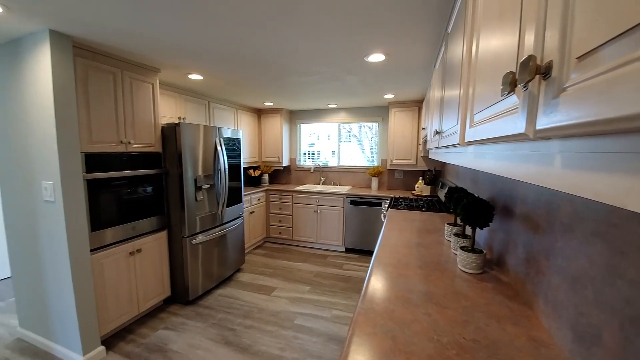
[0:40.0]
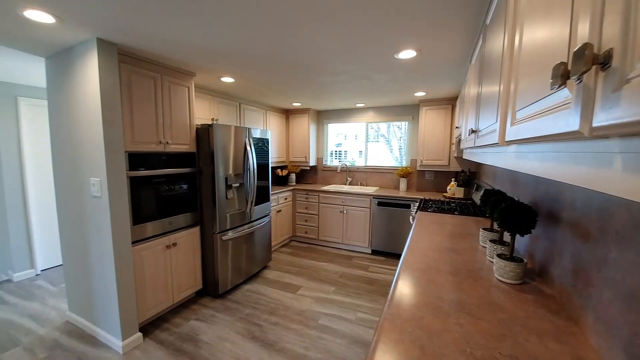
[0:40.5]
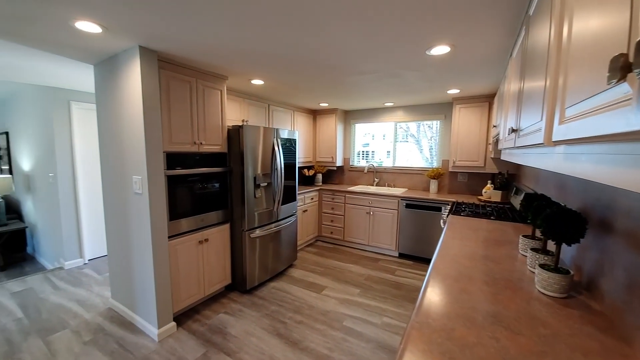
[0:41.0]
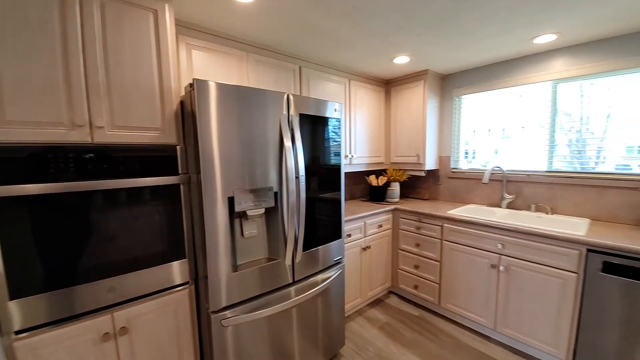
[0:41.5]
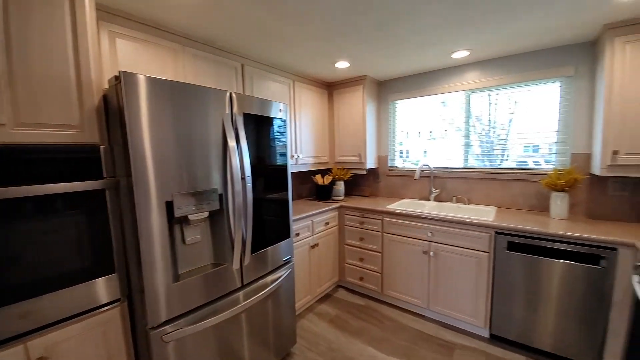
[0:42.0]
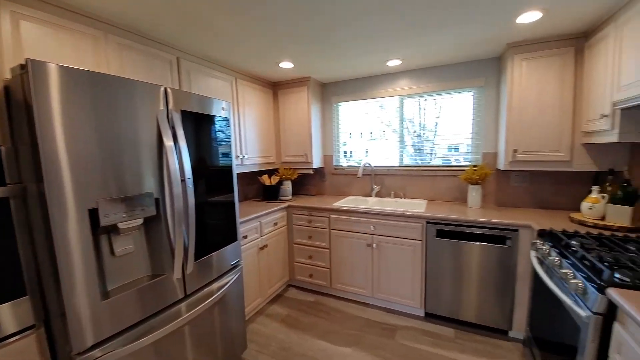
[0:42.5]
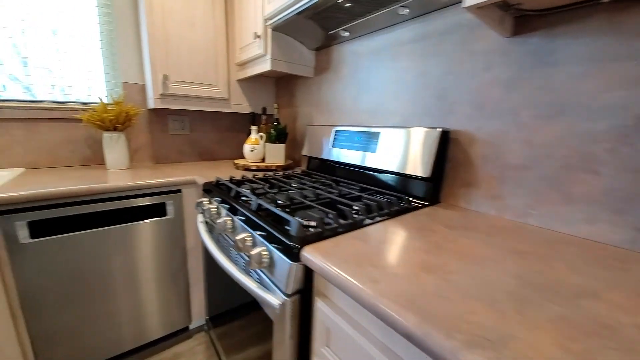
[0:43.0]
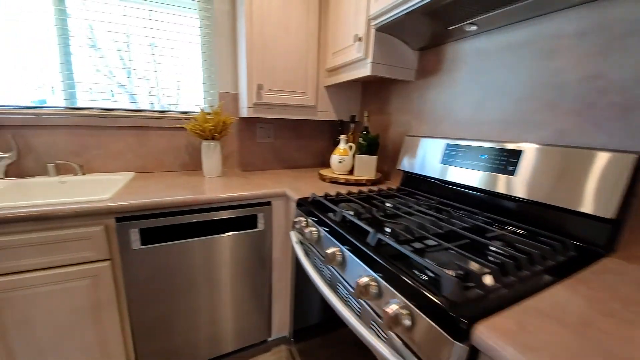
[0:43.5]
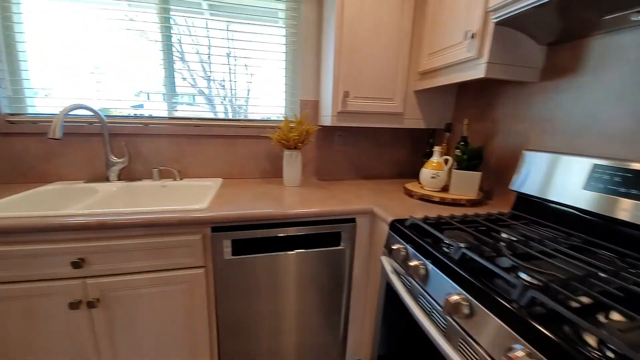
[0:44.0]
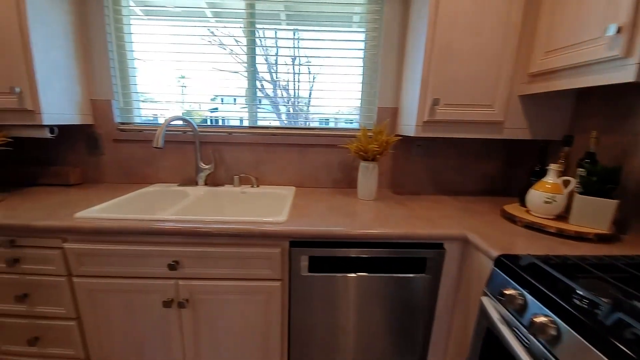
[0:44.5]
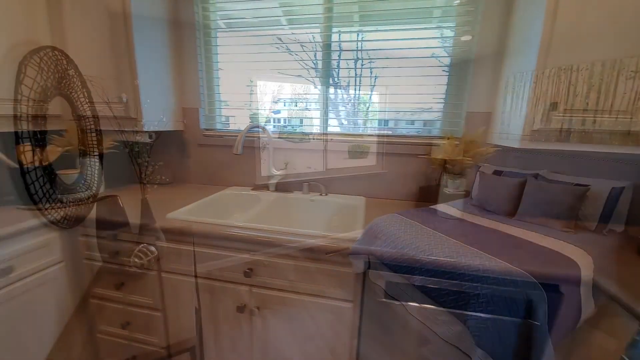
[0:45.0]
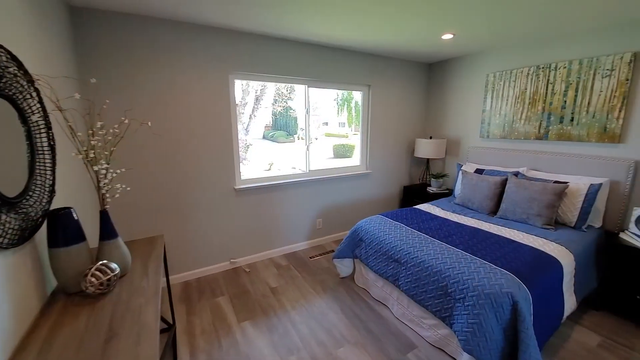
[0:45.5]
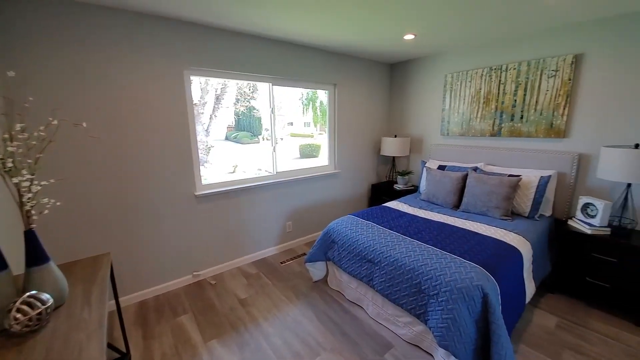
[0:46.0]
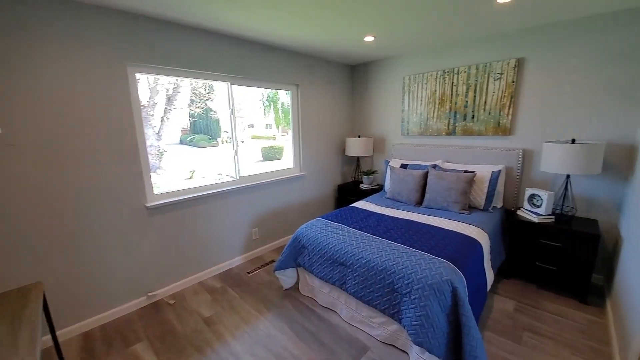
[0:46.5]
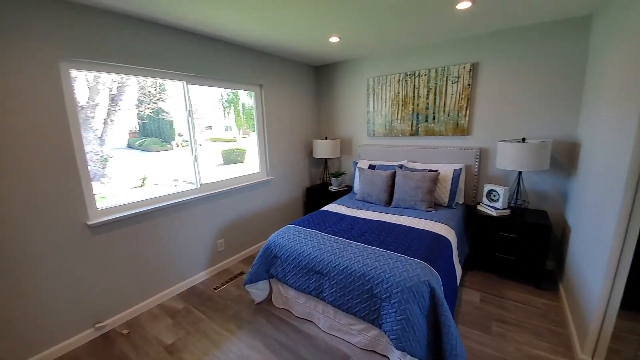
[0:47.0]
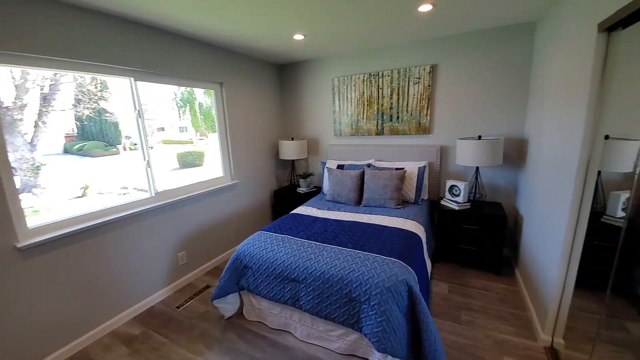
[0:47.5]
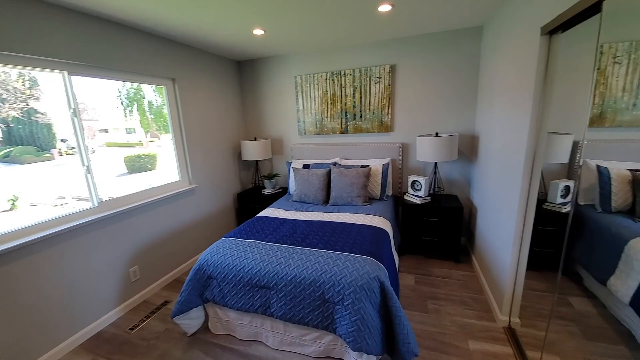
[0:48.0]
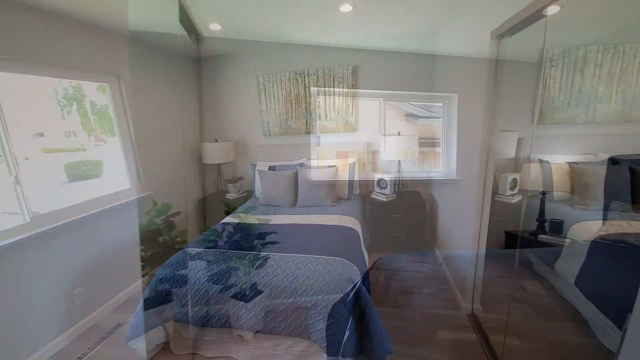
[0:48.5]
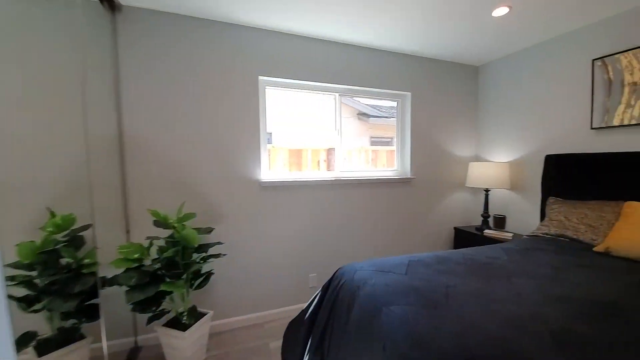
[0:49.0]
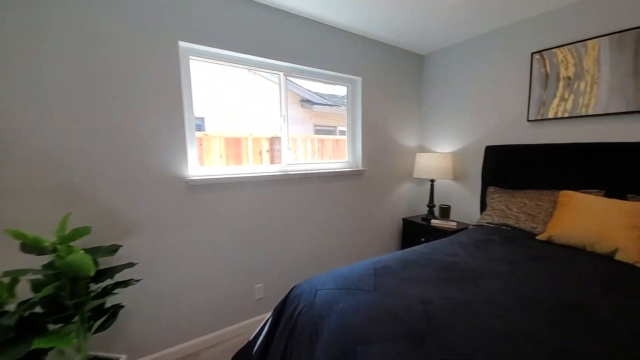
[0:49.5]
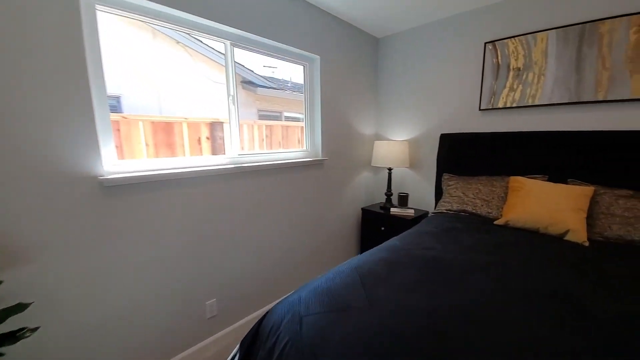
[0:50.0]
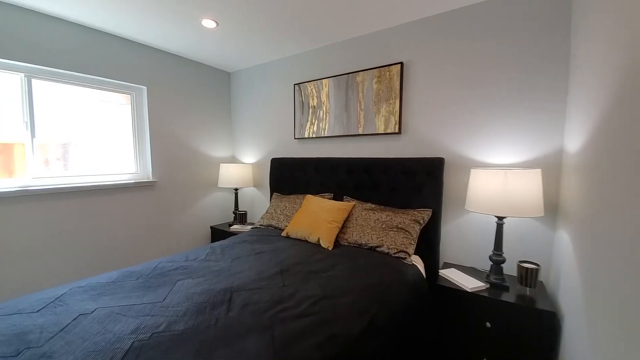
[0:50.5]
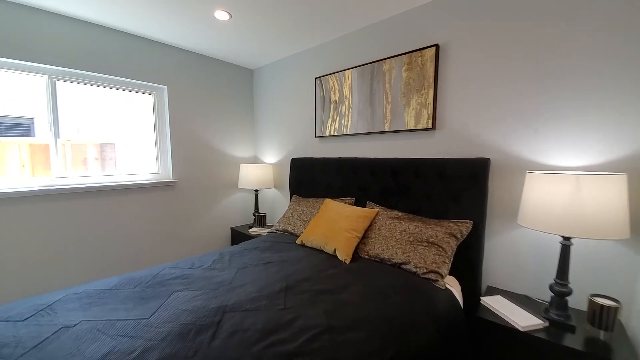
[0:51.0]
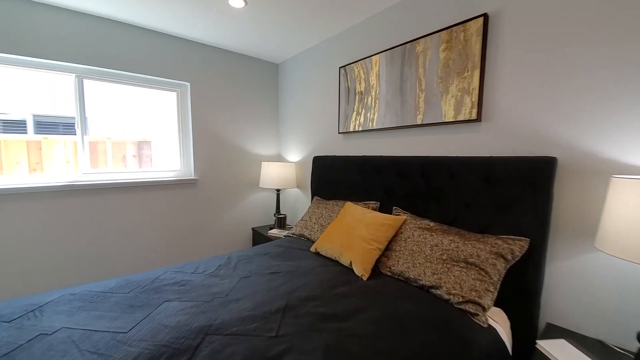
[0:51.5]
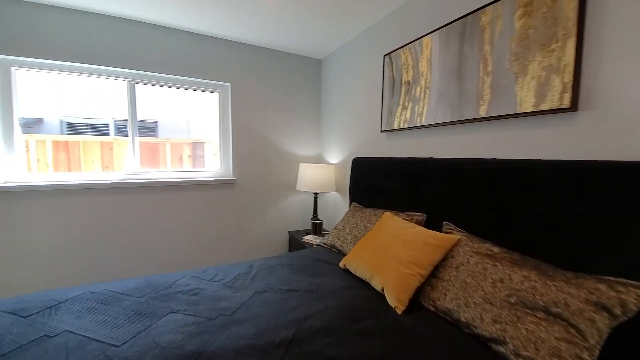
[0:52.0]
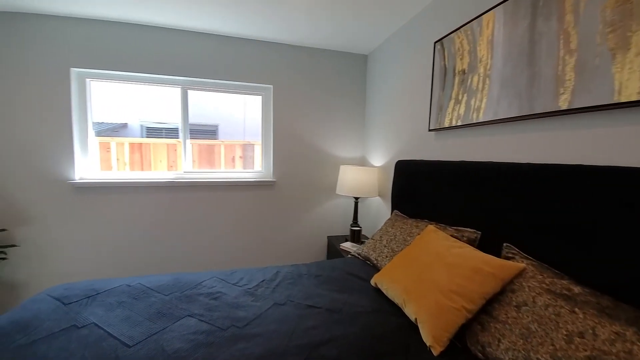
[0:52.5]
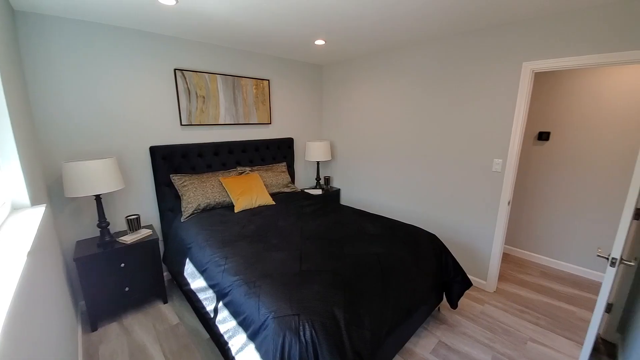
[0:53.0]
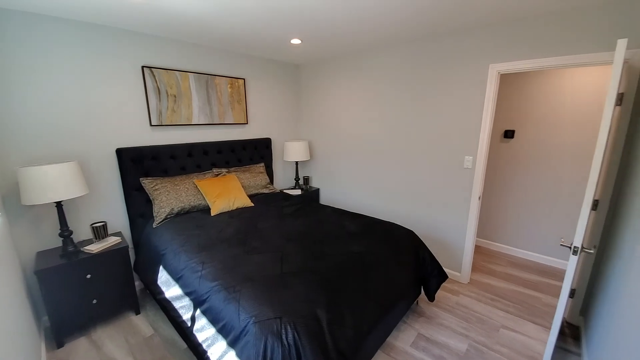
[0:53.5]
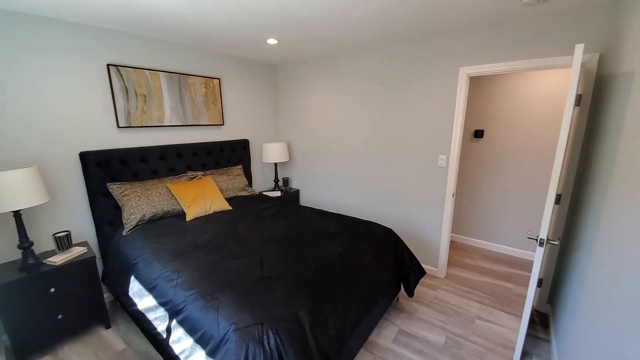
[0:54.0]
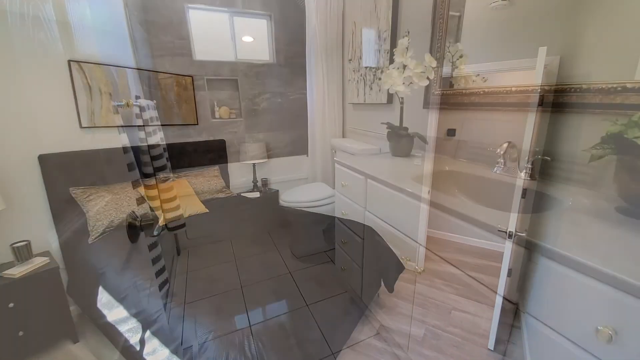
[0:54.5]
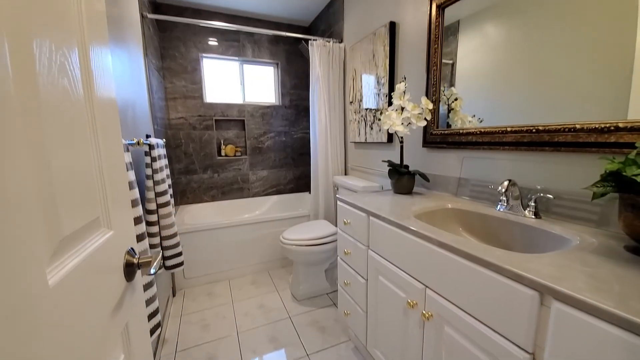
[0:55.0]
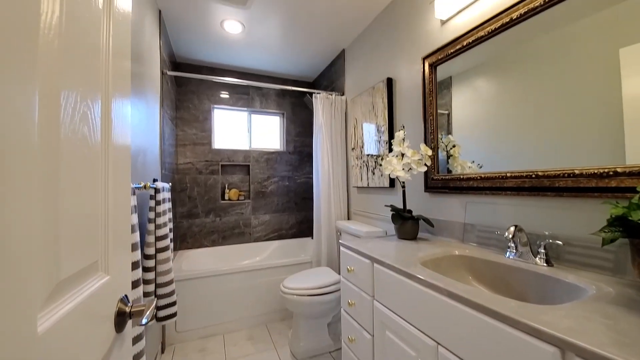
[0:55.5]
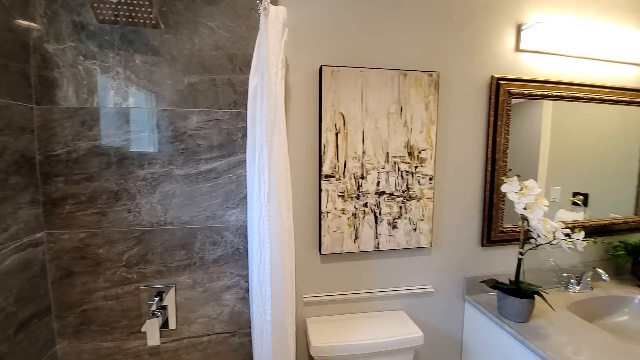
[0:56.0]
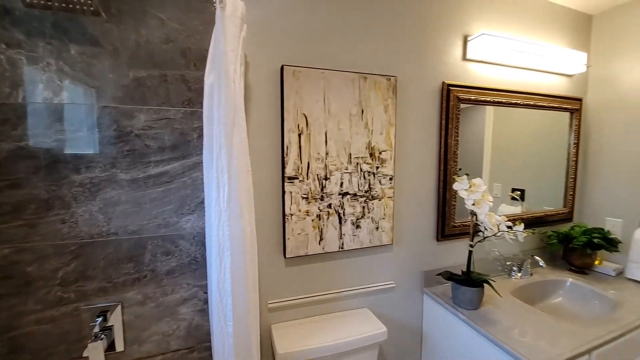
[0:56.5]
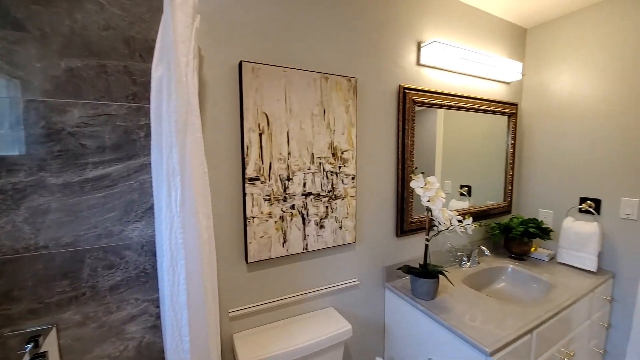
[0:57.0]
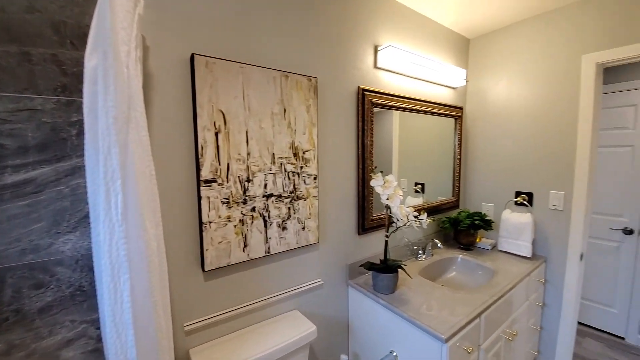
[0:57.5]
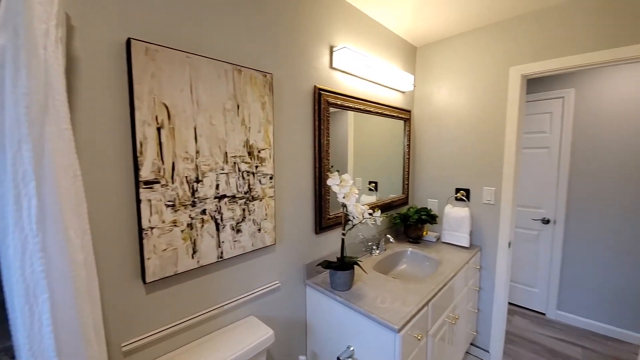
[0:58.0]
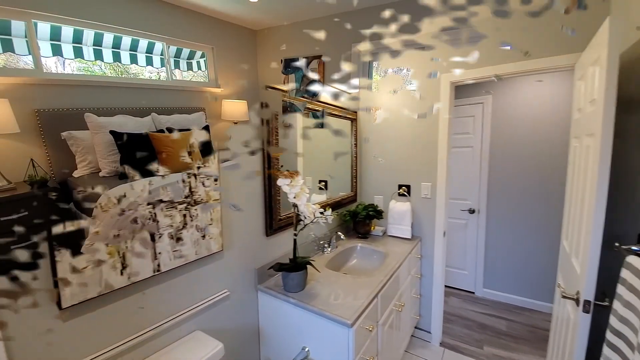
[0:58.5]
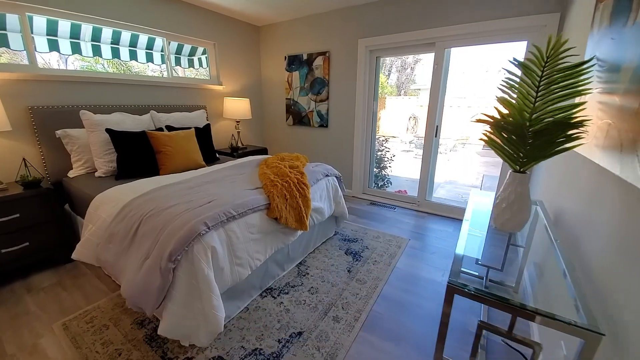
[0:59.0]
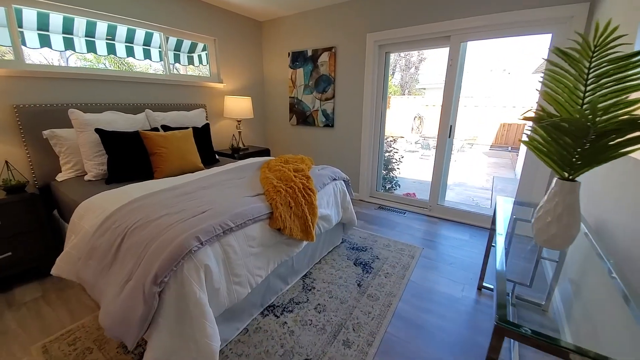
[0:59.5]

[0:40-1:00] More of the interior is shown. A wide-angle lens makes the house look much bigger than it is; it is probably about 1,400 to 1,600 square feet. The bedrooms appear, and the size of the bed in relation to the room shows how small they are. Even the master bedroom is very small, about the size of a regular bedroom.